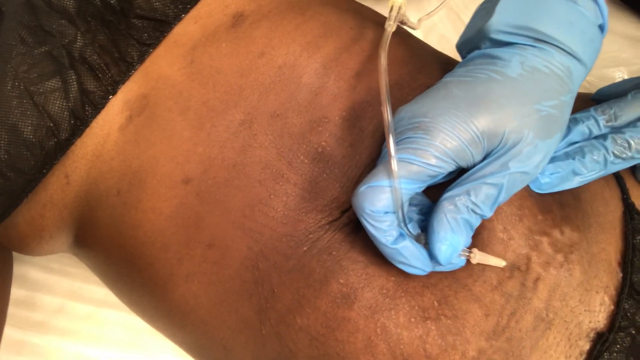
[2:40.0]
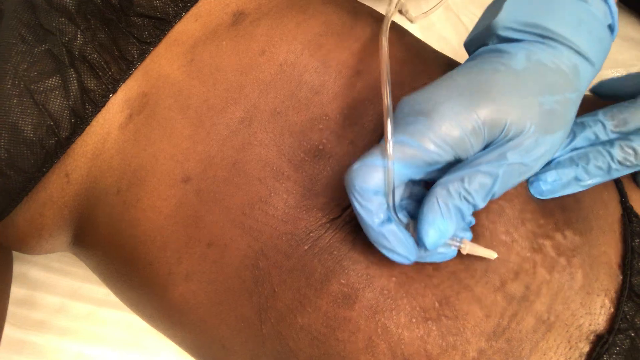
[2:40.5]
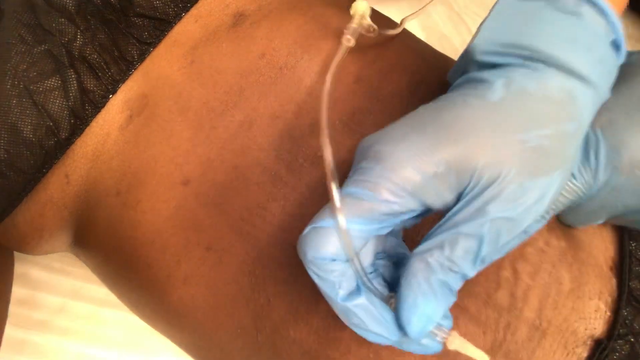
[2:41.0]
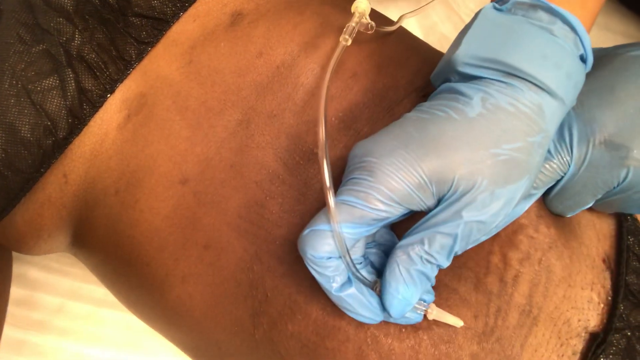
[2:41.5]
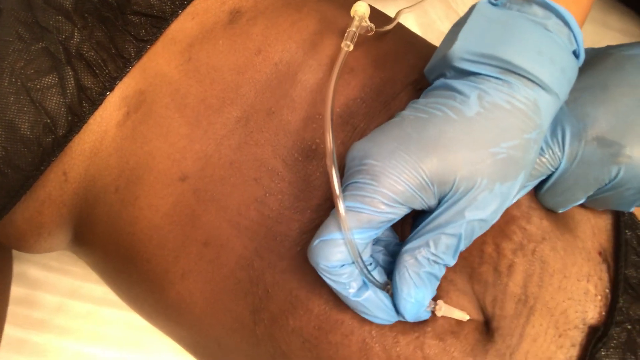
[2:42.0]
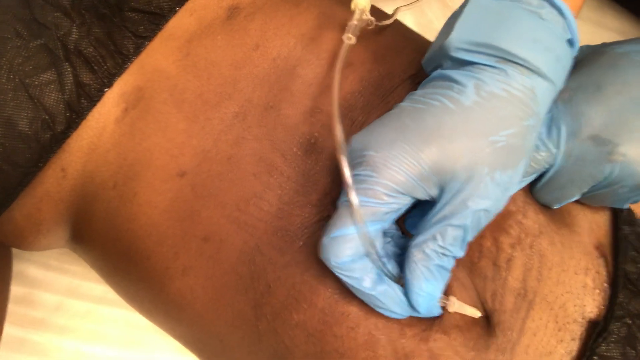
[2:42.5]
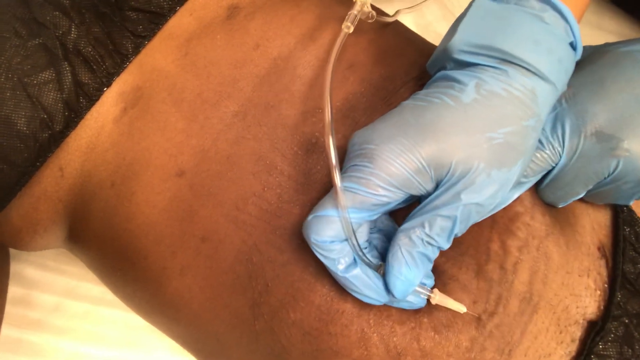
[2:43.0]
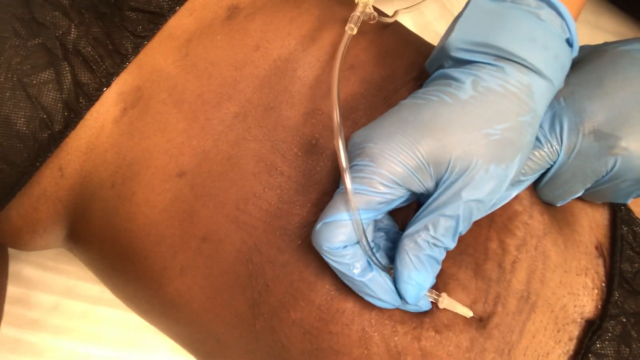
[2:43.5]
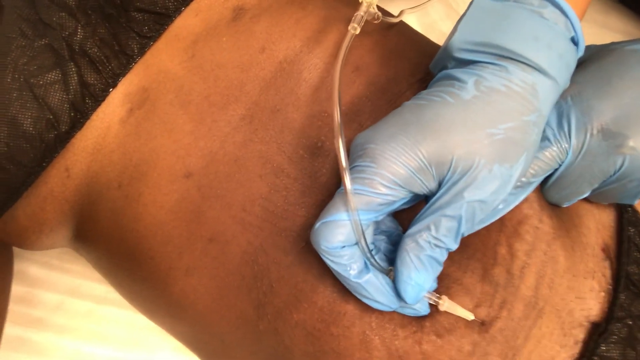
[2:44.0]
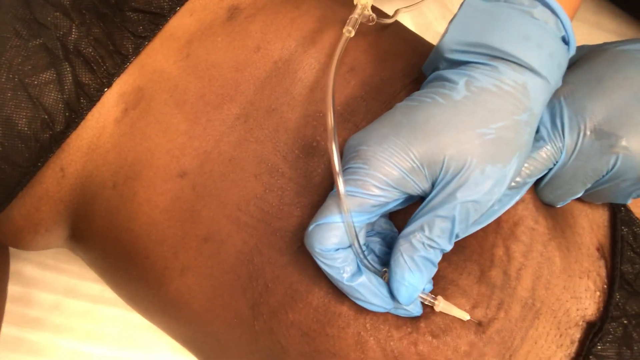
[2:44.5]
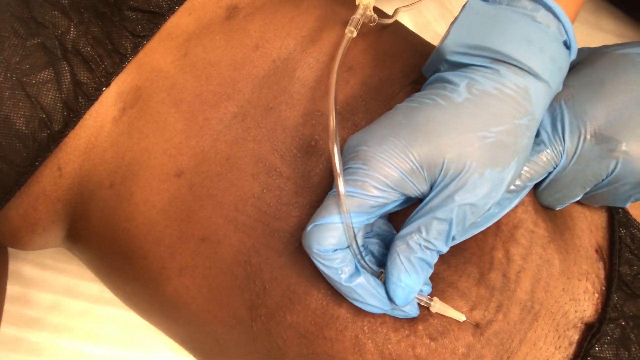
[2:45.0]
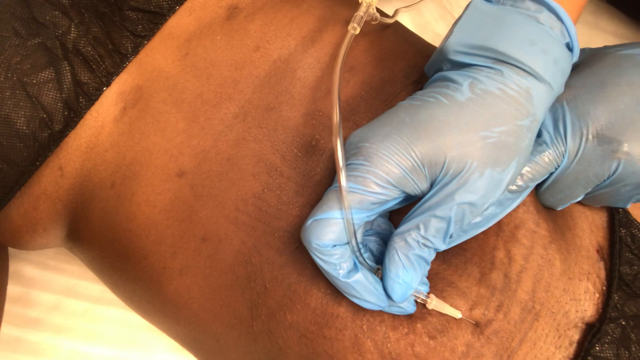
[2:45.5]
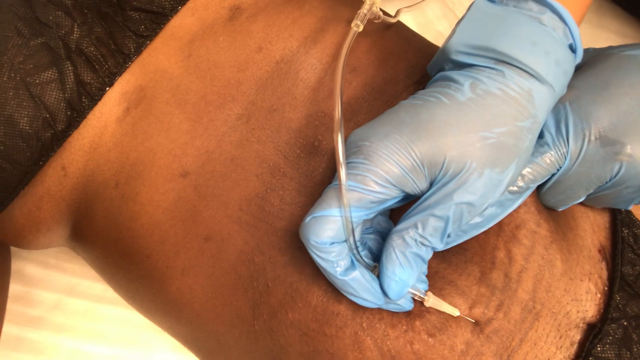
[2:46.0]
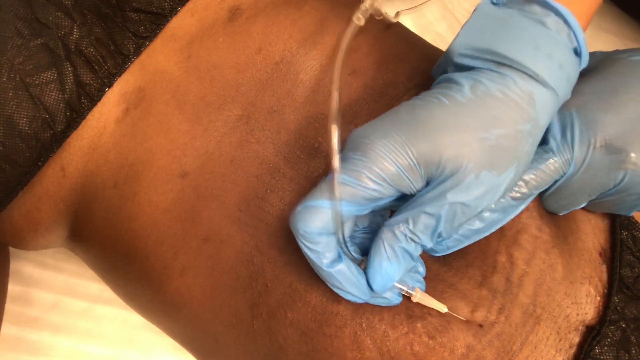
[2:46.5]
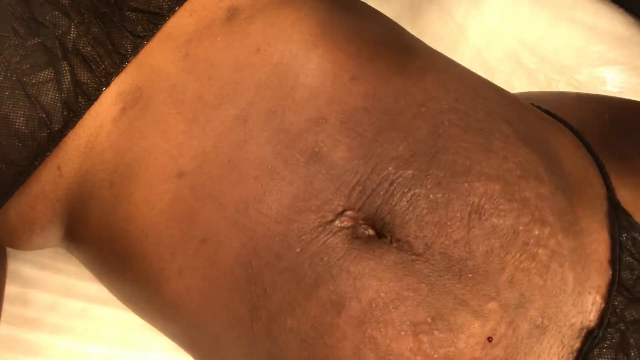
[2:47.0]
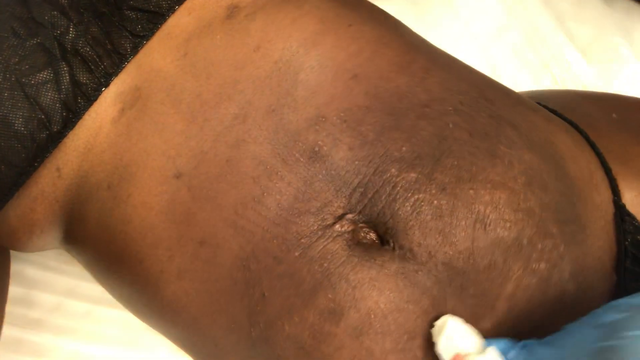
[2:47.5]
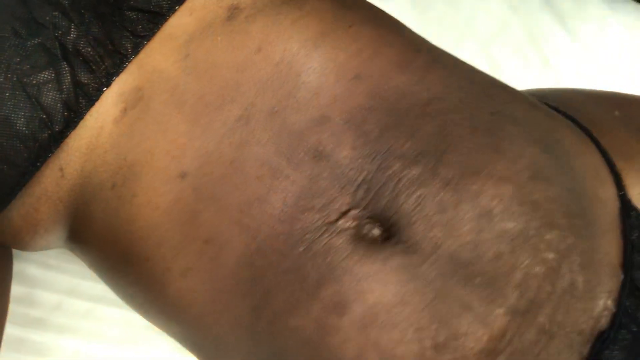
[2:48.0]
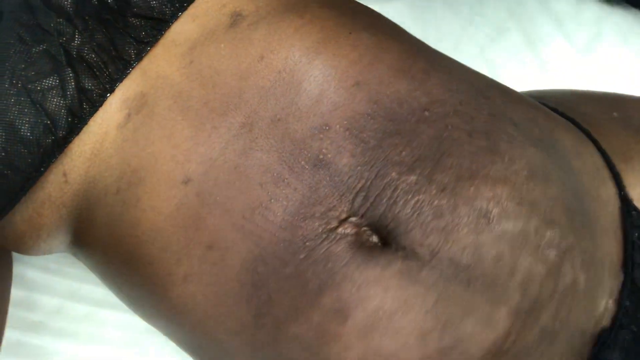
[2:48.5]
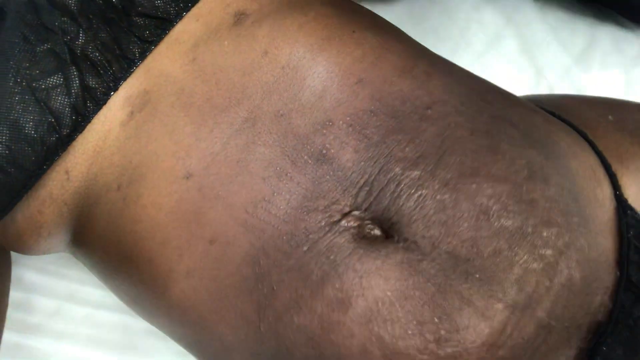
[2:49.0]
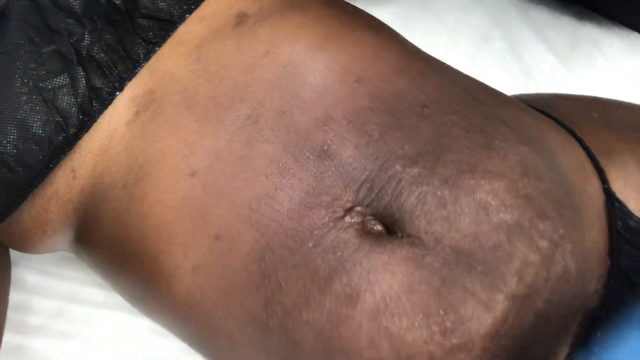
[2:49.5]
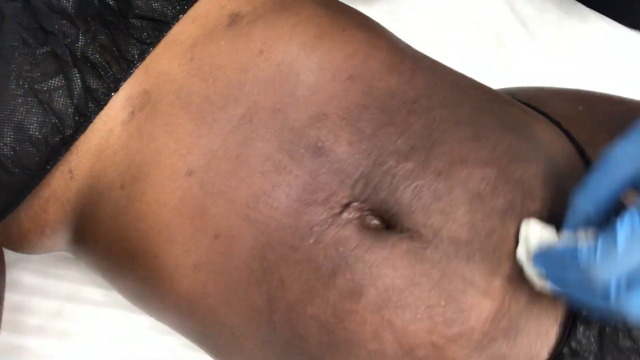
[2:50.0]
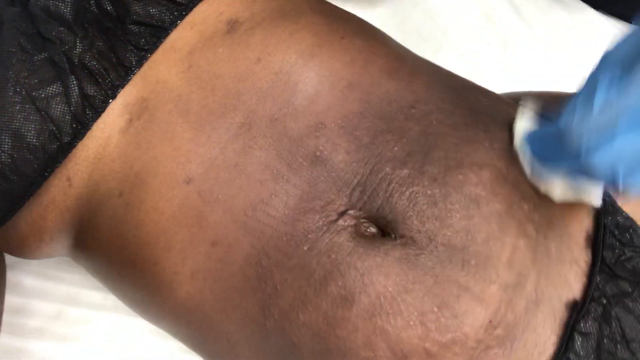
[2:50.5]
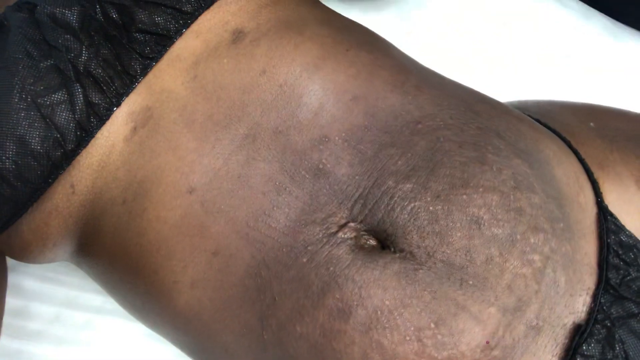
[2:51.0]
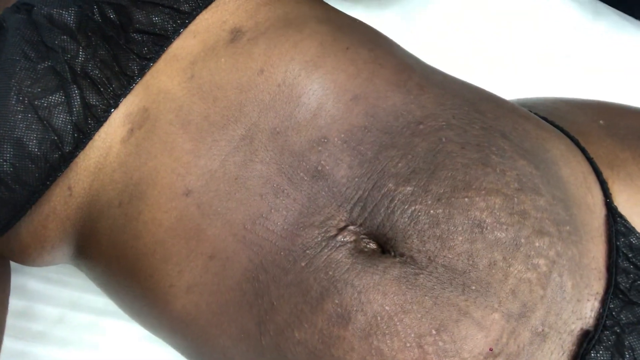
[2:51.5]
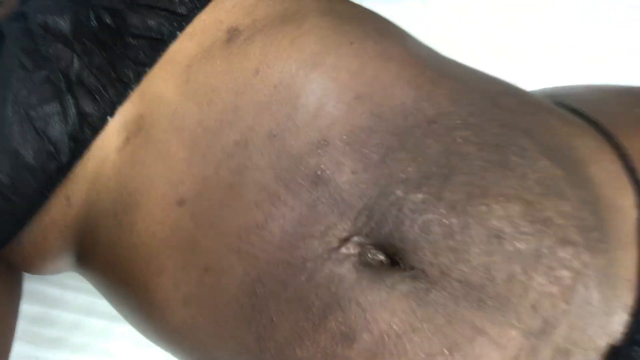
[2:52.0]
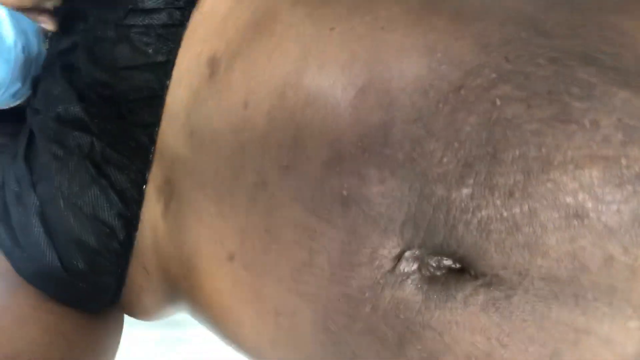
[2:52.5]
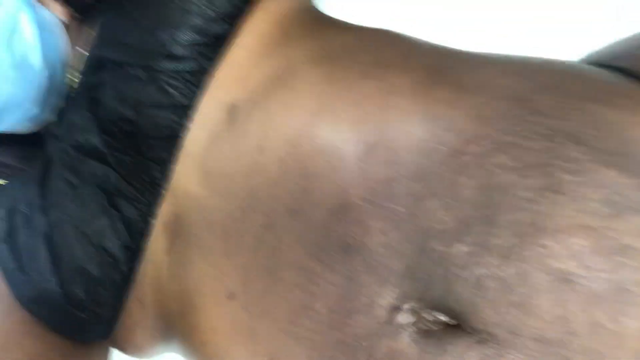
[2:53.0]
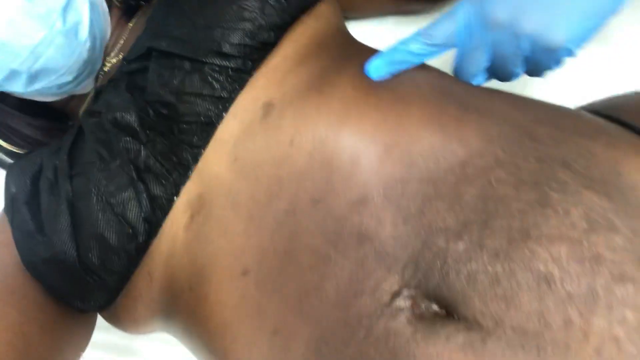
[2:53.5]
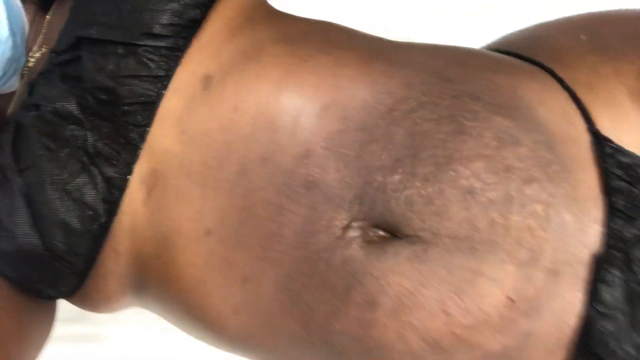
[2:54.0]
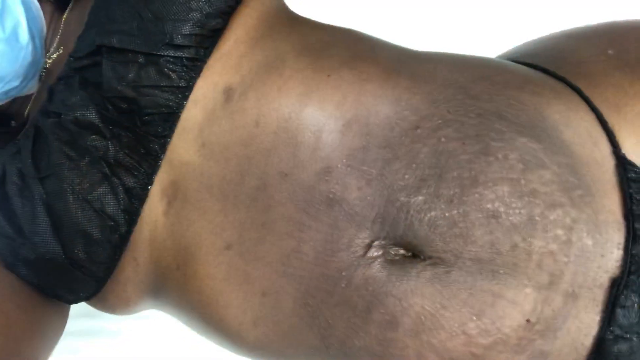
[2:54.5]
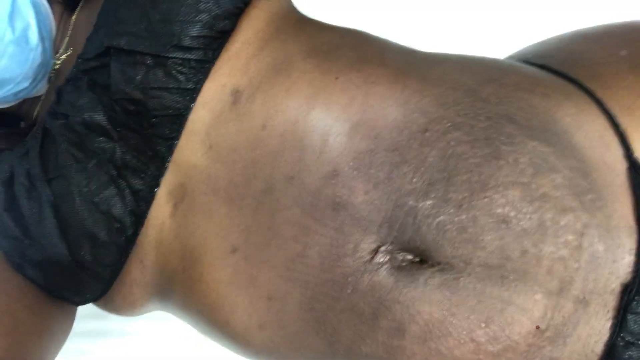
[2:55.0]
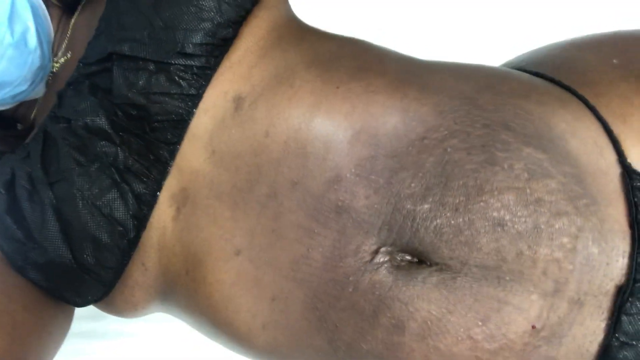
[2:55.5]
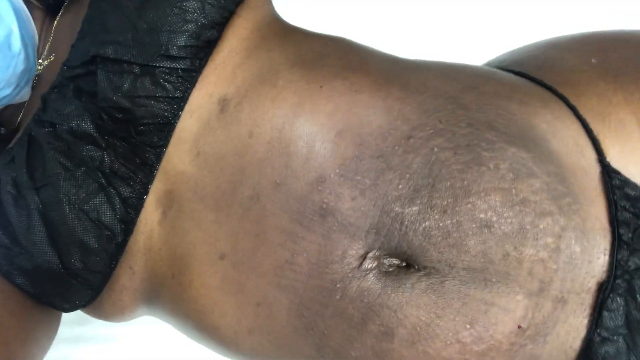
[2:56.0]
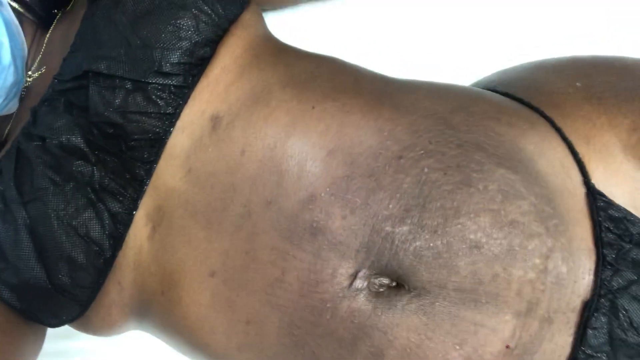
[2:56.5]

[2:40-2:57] The person wearing latex gloves on each hand is still injecting just below the brown-skinned woman's belly button. She wears a fabric bra and underpants resembling a patient gown. Because more of the doctor's glove is in frame than usual, a watch is visible underneath one of the gloves. The tube attached to the needle is either injecting or suctioning out some sort of content; since the tube remains clear, something is probably being injected. After removing the needle from the bottom section, the doctor dabs a tissue across the bottom of the stomach several times and then rubs the belly slightly. The doctor then pokes the patient's top right rib, perhaps pointing to it. This appears to possibly be some sort of stopping point or break in the procedure.